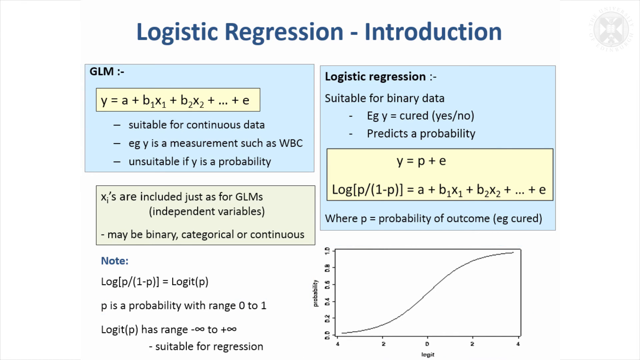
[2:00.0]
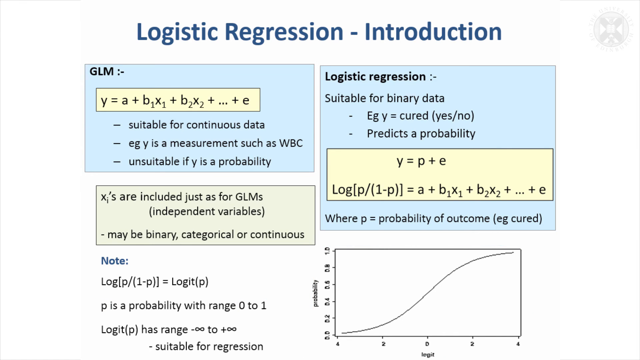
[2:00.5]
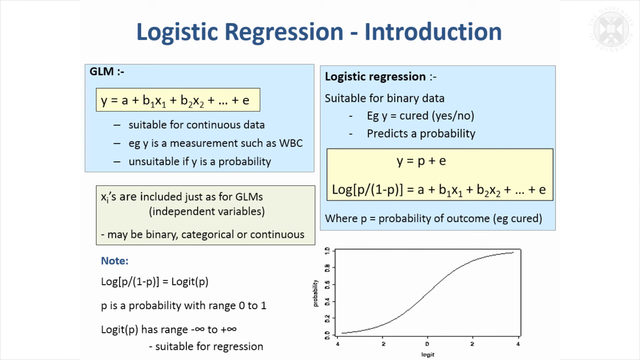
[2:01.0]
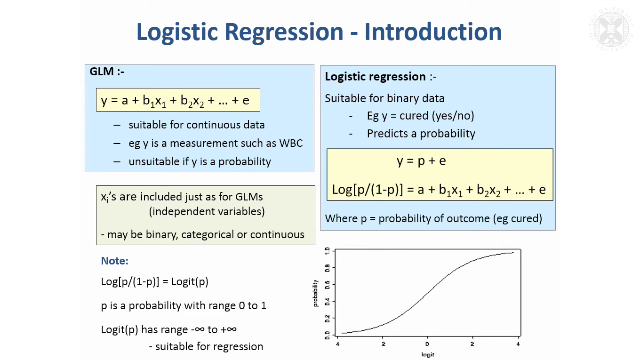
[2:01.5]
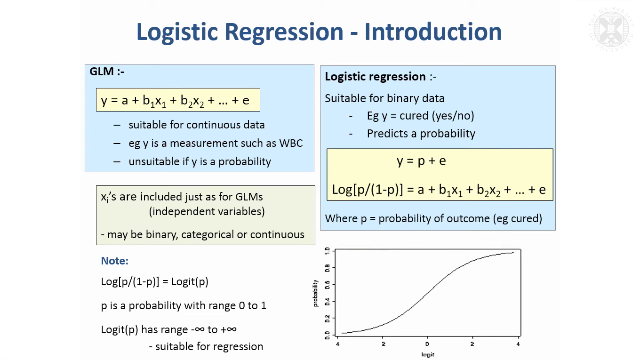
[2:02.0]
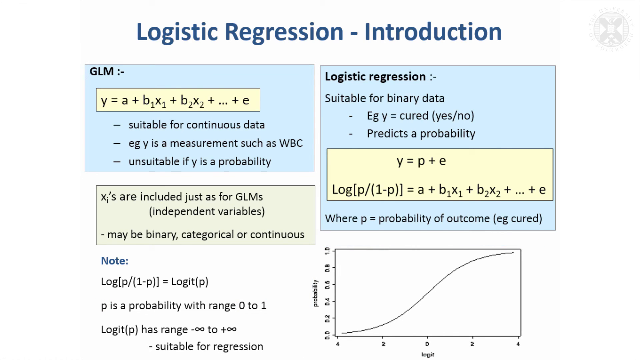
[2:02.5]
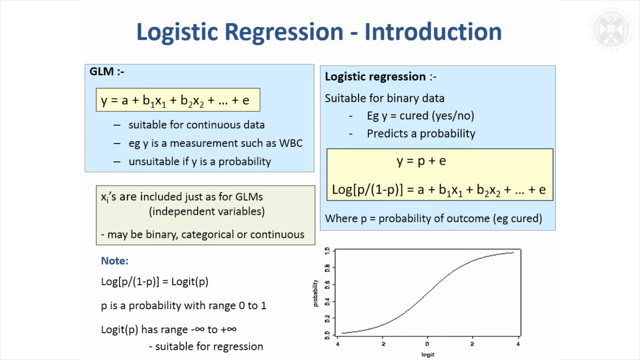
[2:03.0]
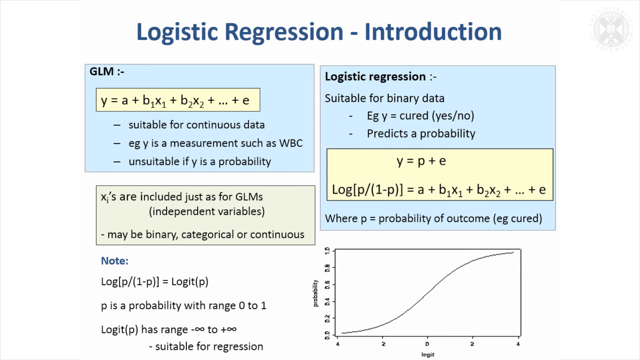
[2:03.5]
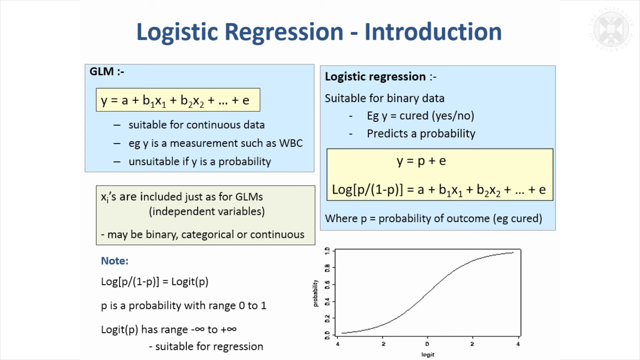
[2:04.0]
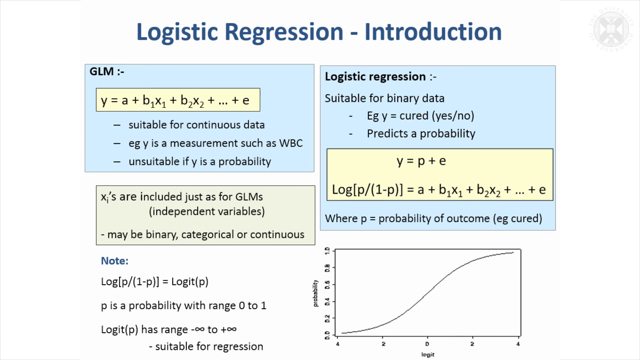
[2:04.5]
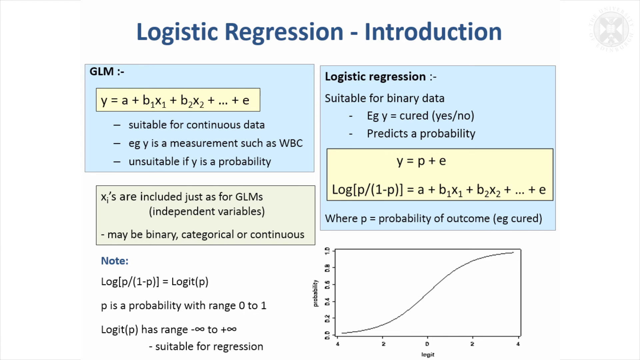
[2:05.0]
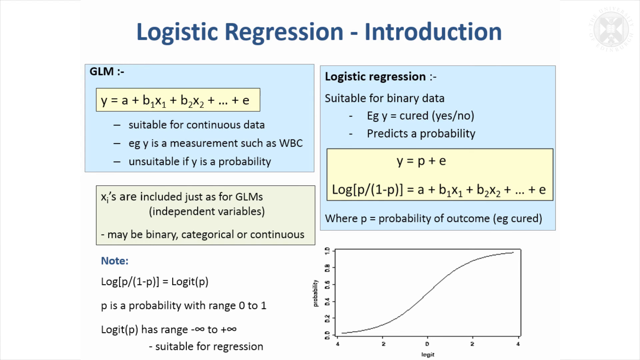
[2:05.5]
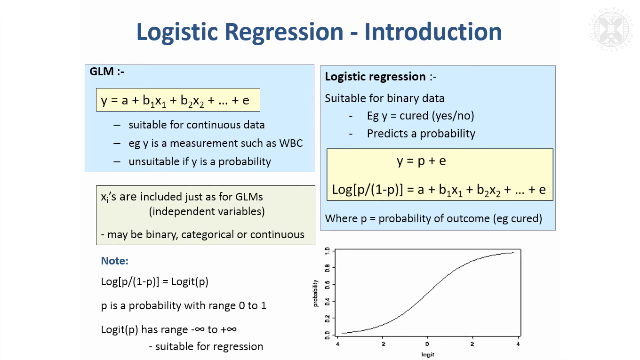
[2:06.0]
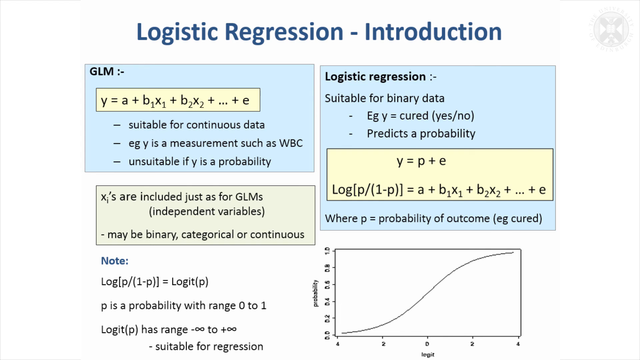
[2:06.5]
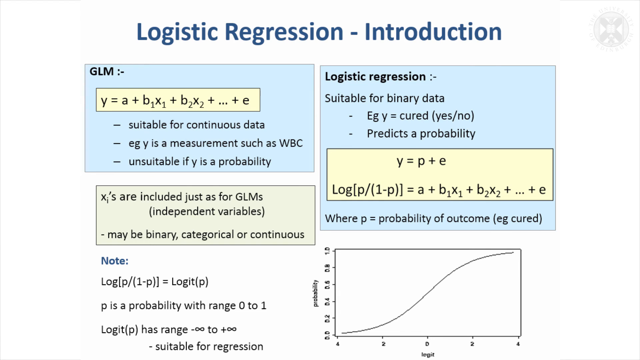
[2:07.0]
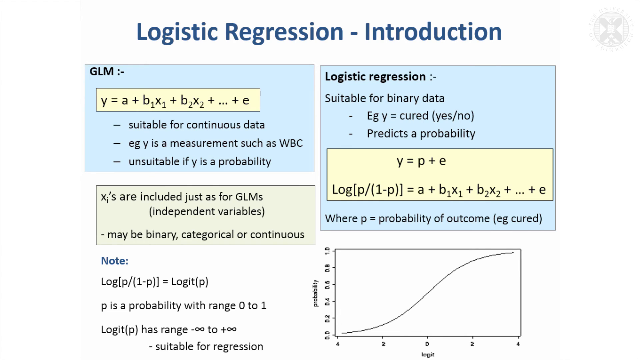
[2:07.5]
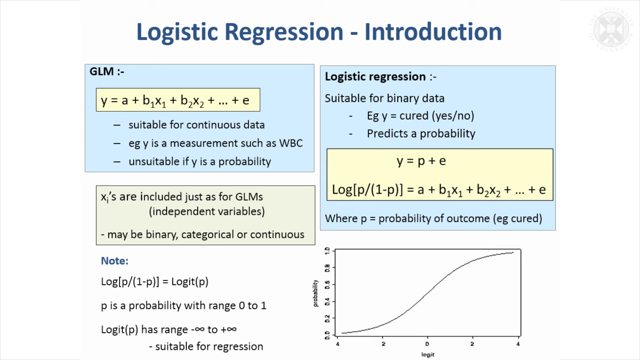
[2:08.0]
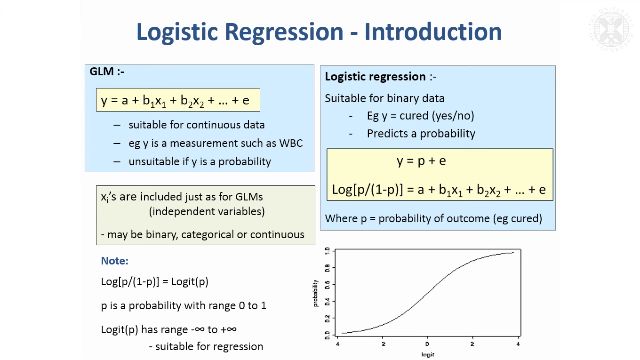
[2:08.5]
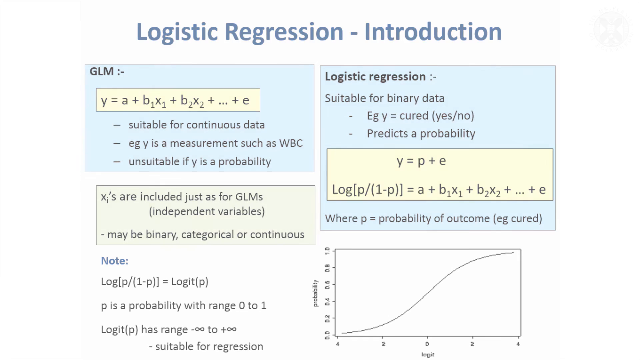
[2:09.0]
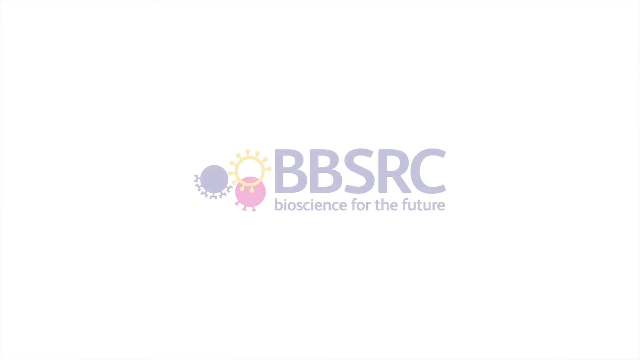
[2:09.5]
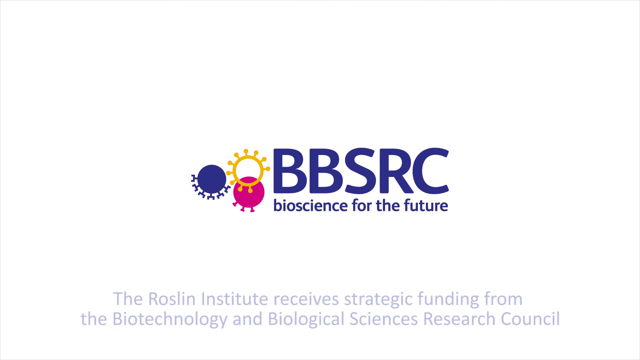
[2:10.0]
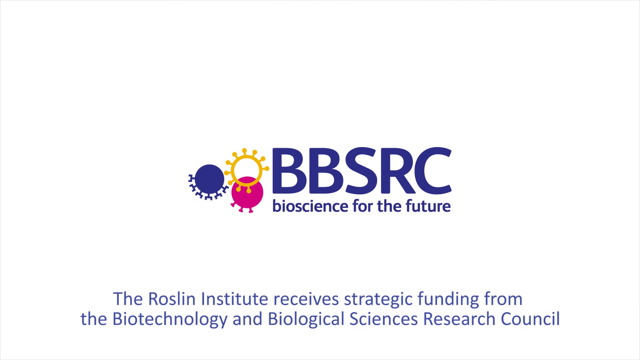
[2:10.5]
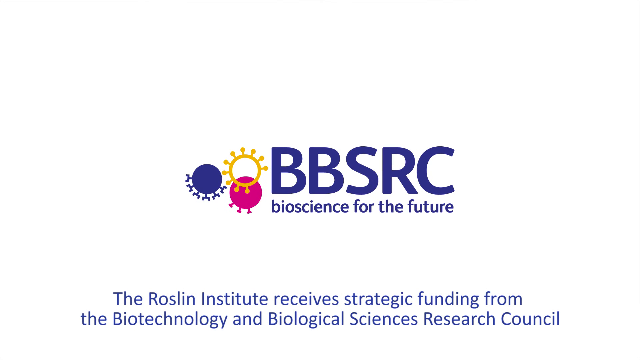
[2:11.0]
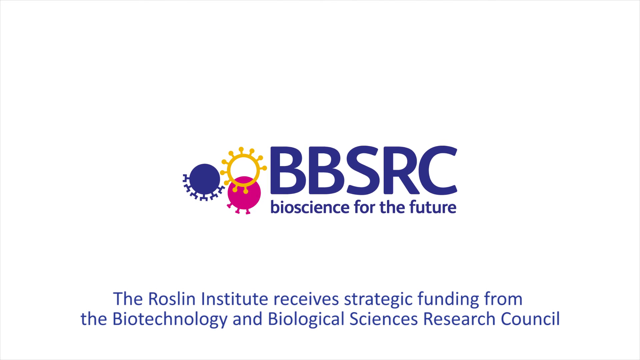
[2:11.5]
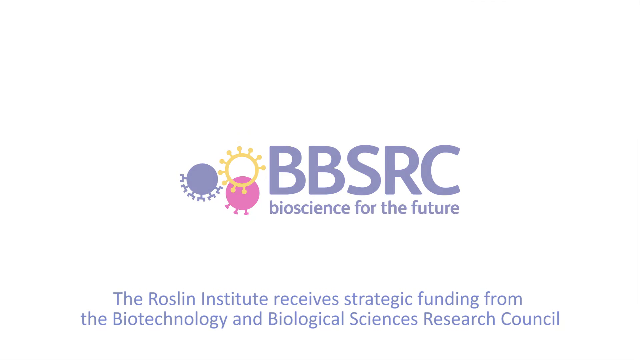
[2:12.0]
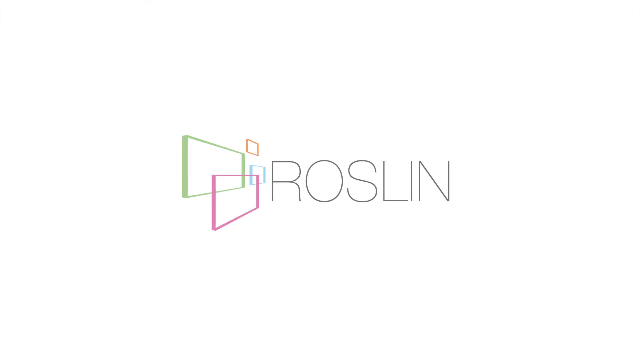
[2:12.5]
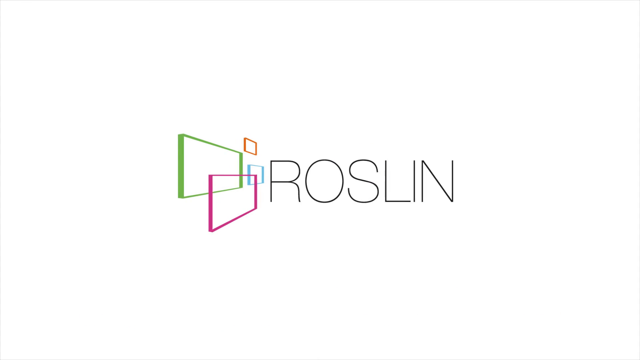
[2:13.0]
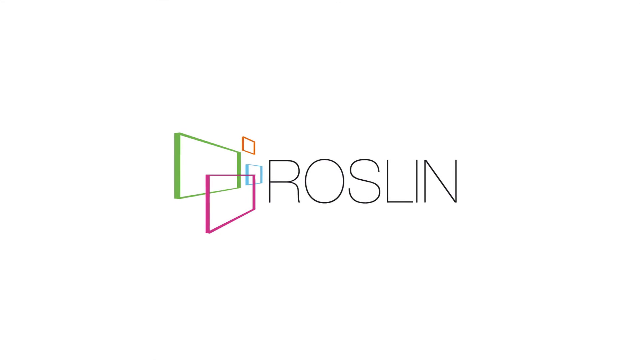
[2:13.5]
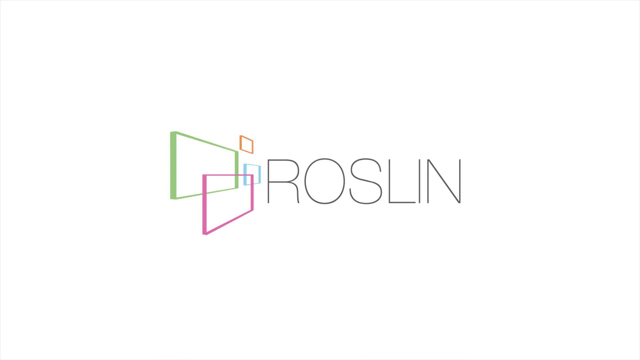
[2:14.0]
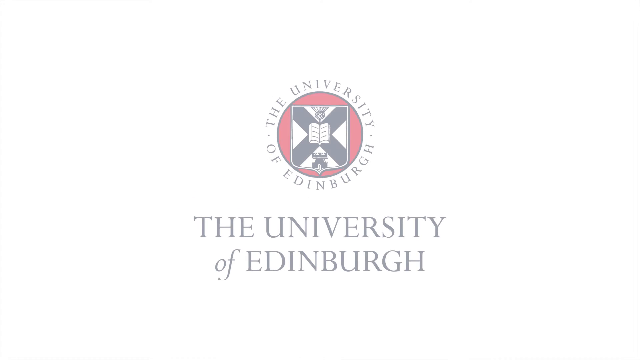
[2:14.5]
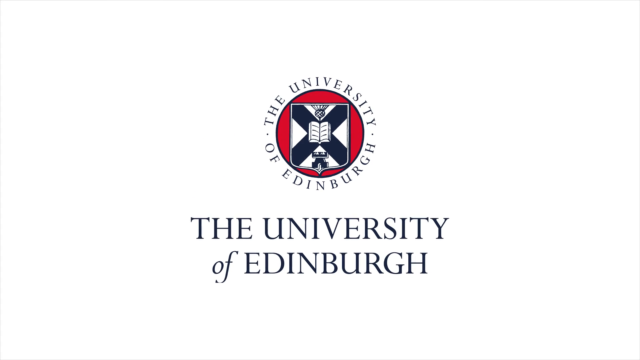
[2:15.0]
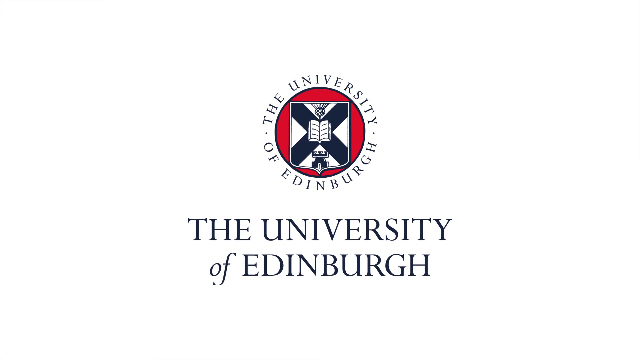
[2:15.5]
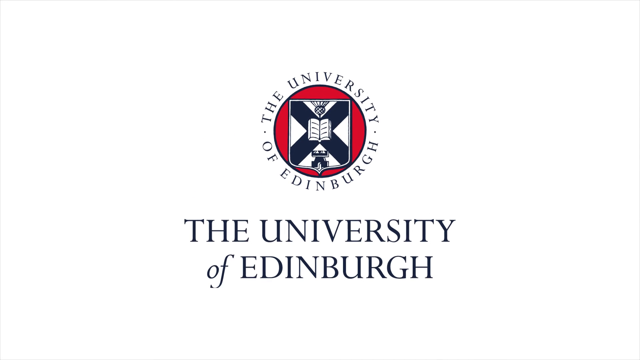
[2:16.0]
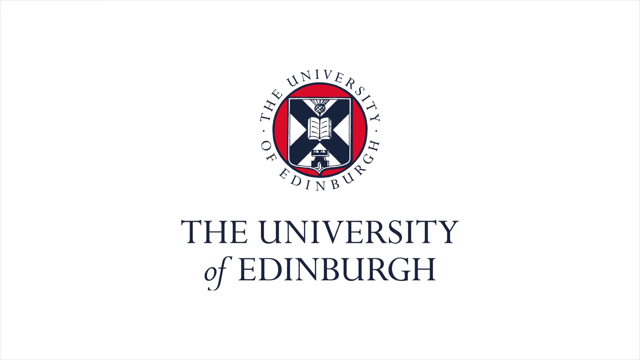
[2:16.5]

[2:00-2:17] The screen begins with the mathematics explanation of the logistic regression introduction on a white background. Immediately afterward, a screen about BBSRC, "bioscience for the future", appears, with a logo on the right inside the writing and text at the bottom. An animation of another logo then appears, written in Russian, with a green and a red box as part of the logo. The final screen is an animation of the University of Edinburgh that appears gradually and seems to zoom slowly toward the screen. The logo is red with something like an X inside it, and "University of Edinburgh" is written around it.